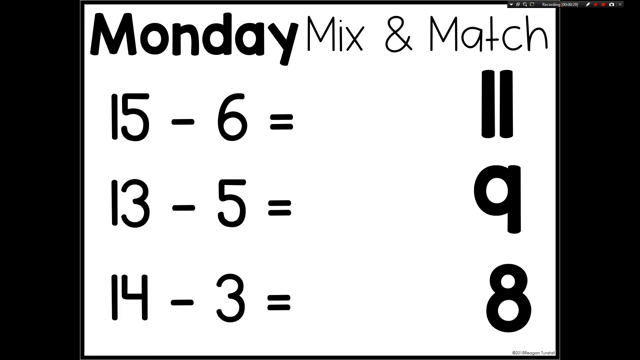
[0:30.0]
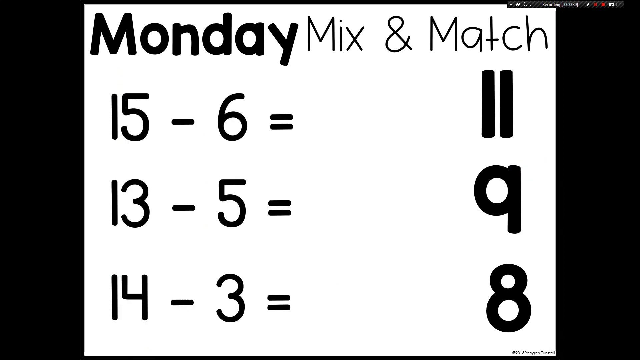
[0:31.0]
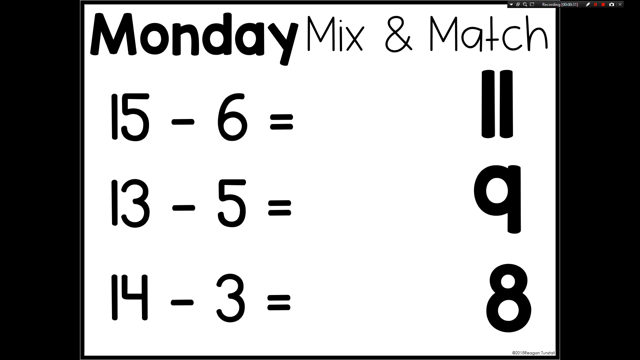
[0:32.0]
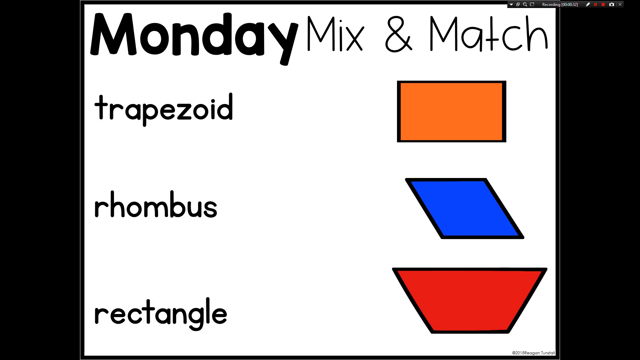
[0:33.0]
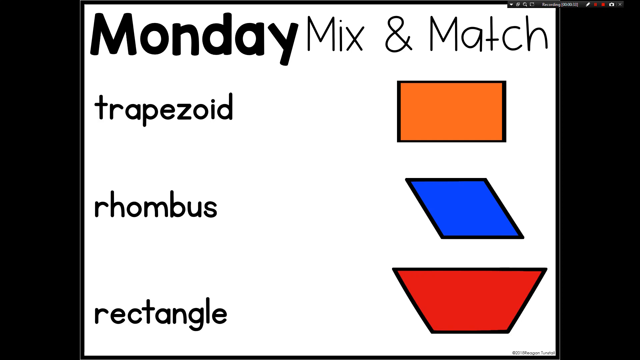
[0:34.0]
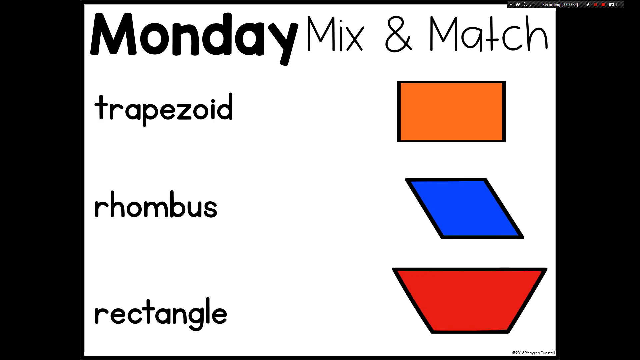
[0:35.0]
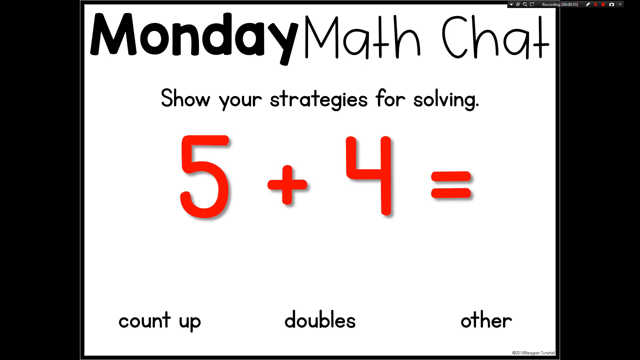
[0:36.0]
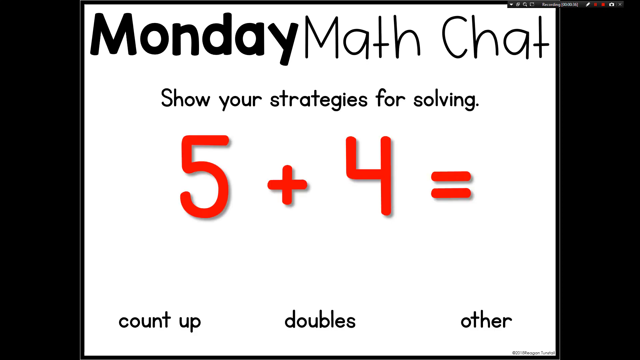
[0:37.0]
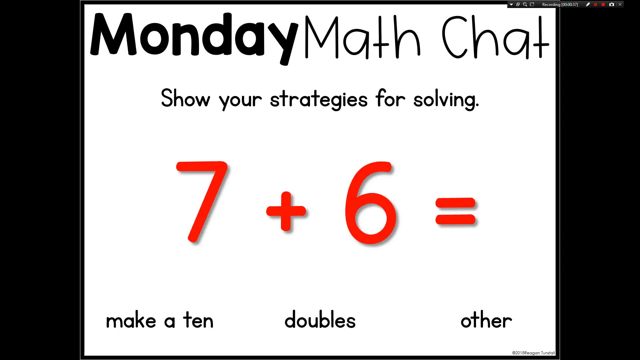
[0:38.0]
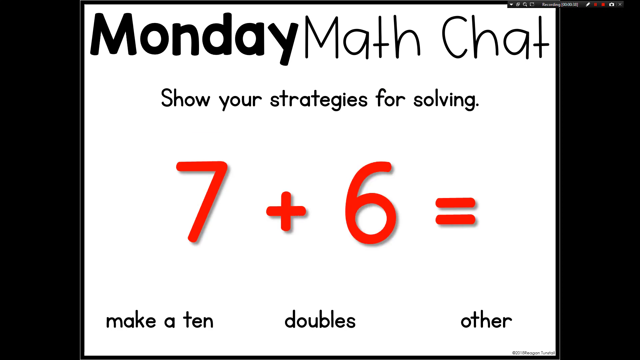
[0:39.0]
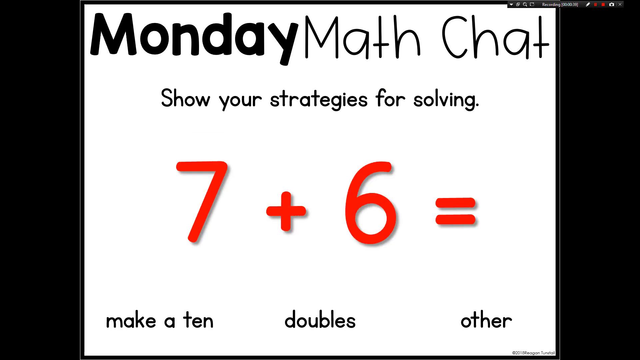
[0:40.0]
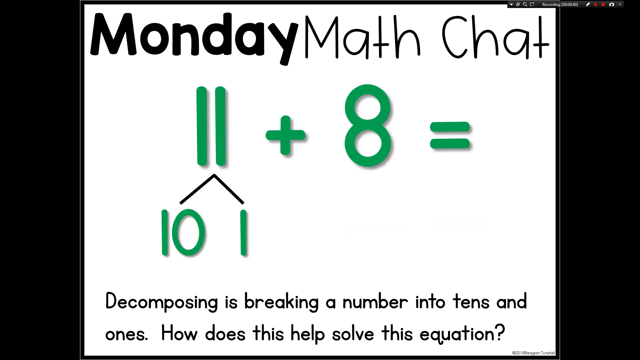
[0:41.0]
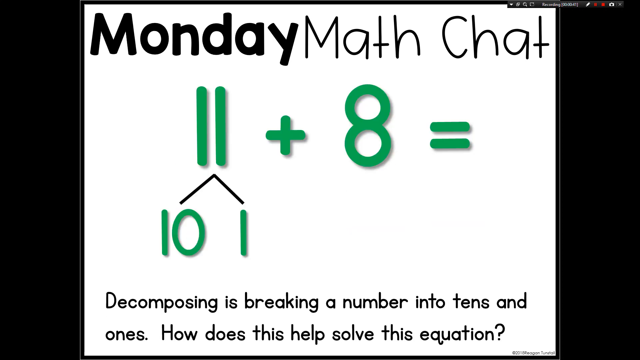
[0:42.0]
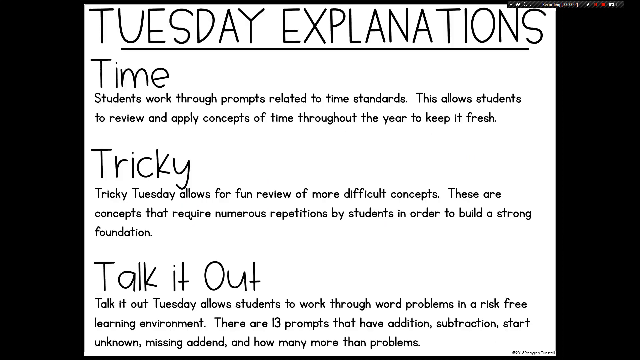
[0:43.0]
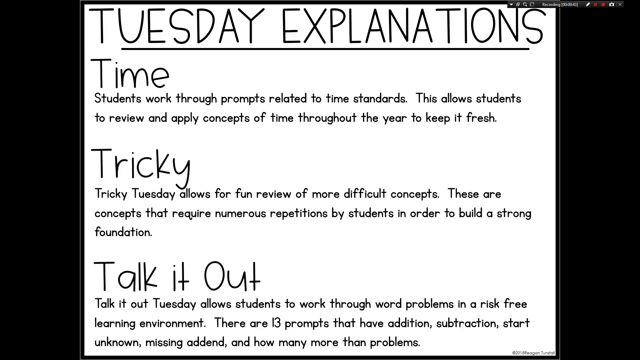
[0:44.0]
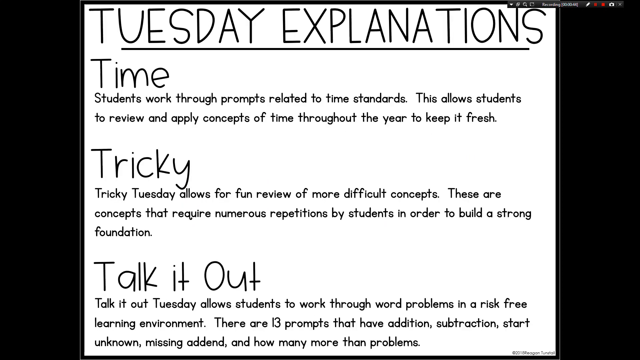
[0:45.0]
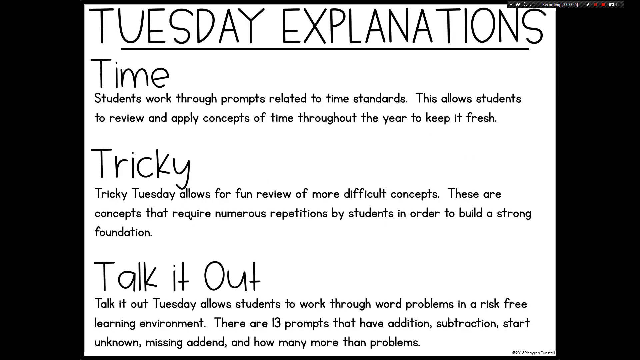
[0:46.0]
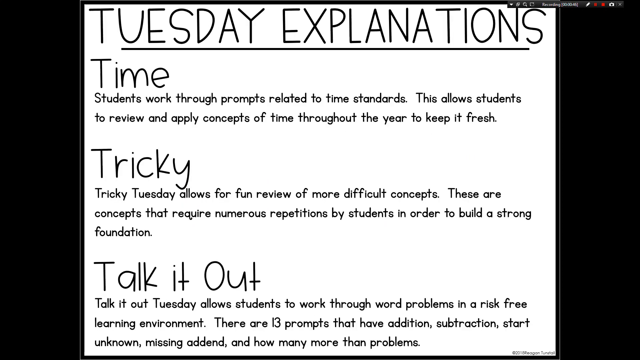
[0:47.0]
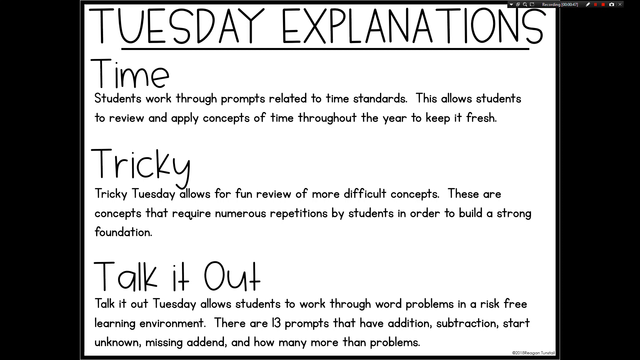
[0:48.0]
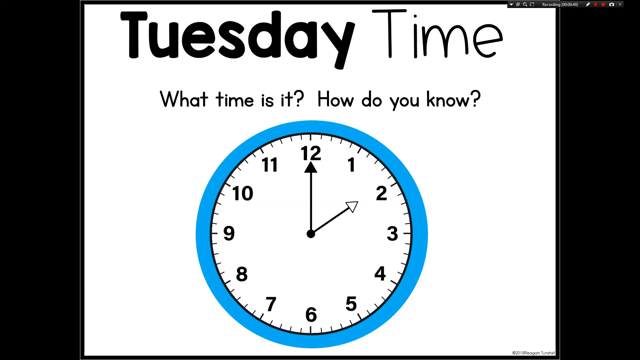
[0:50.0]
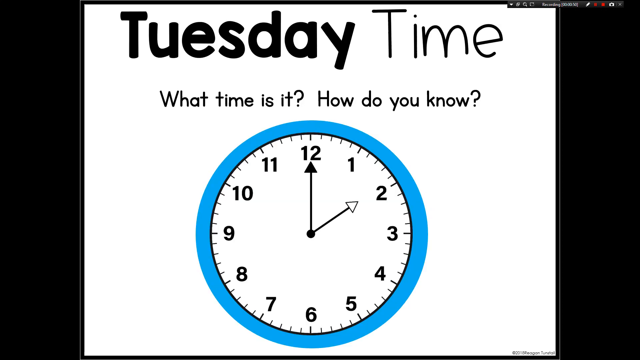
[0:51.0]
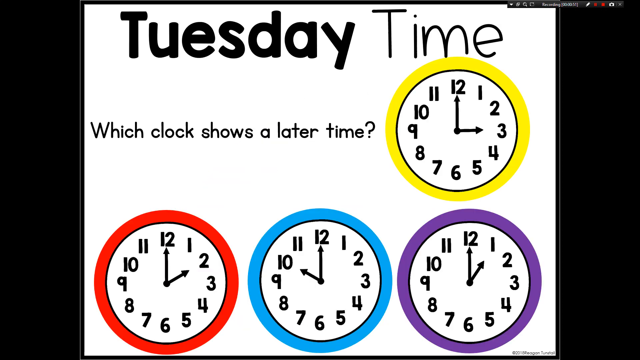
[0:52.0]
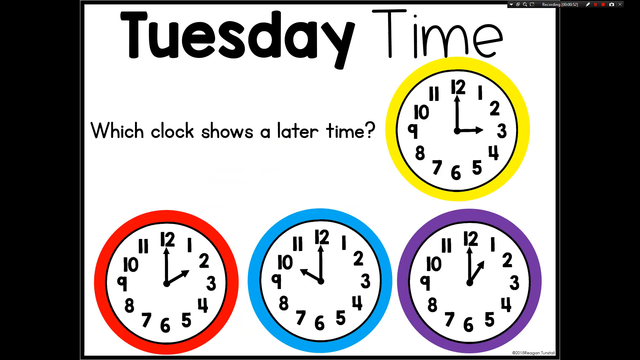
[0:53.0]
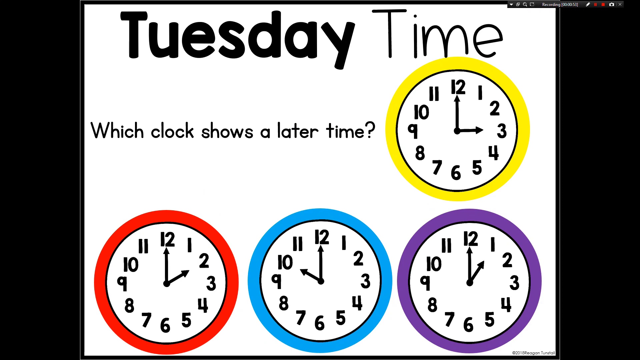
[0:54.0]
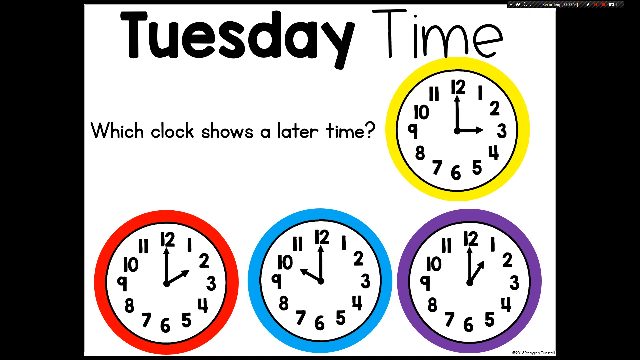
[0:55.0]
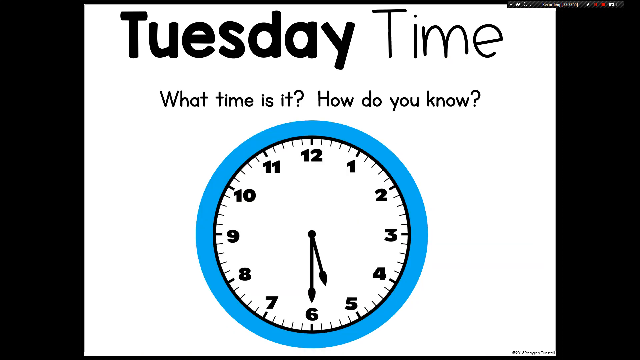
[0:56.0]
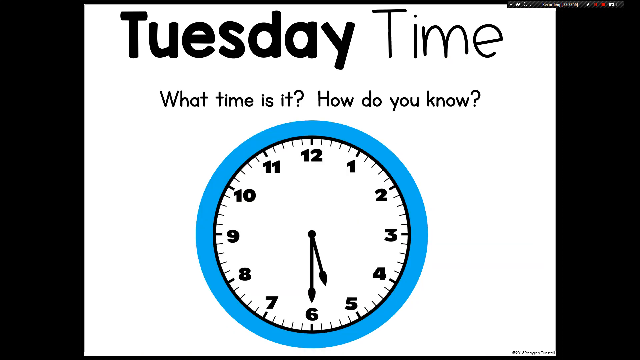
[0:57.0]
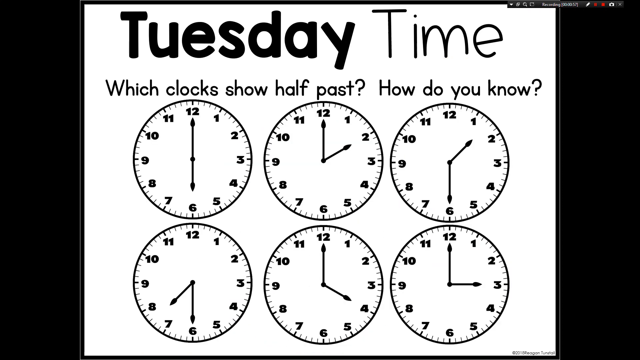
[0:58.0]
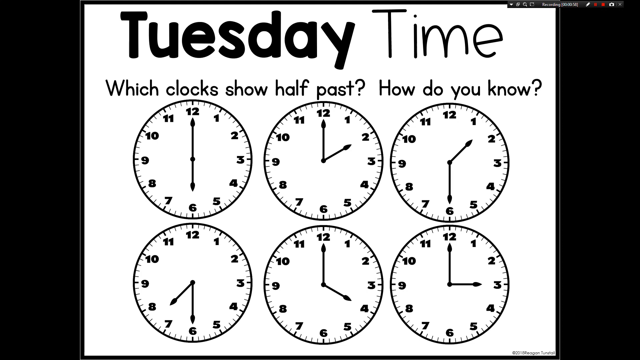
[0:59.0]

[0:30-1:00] Numbers, including "$15.50", appear on a Monday slide along with a rectangle; the task apparently asks to match each shape up. Then the screen says "show your strategies for solving 5 + 4 =" with the options "count up" and "doubles", followed by "show your strategies for solving 7 + 6" with "make 10" and "doubles". Next comes "Monday Math Chat" with "11 + 8 =" and "decomposing is breaking the number into 10s and ones". A "Tuesday explanations" slide follows: "Time: Students work through prompts related to time standards. This allows students to review and apply concepts of time throughout the year to keep it fresh." It continues with "Tricky Tuesday allows for fun review of more difficult concepts" and "Talk it out Tuesday allows students to work through" problems "in a risk-free learning environment", mentioning 13 prompts covering addition, subtraction, start unknown and missing addend. Then a clock appears with "Tuesday time", asking "which clock shows a later time" and "how do you know".